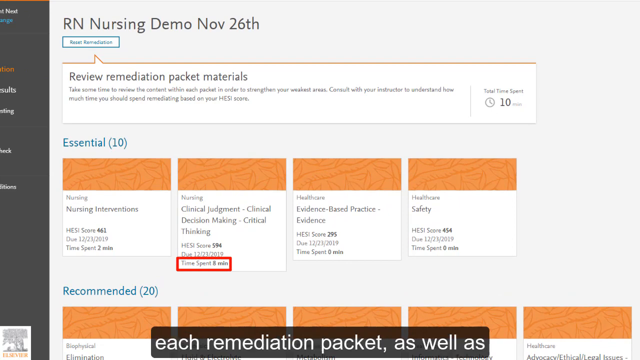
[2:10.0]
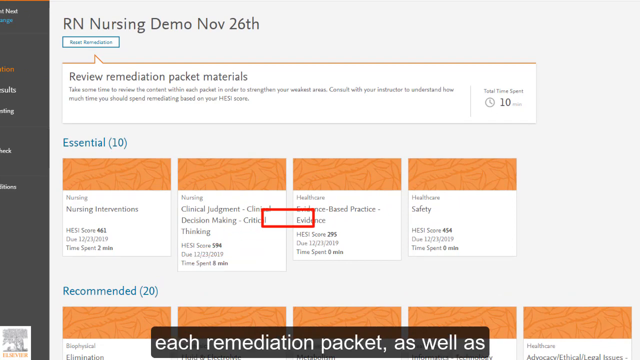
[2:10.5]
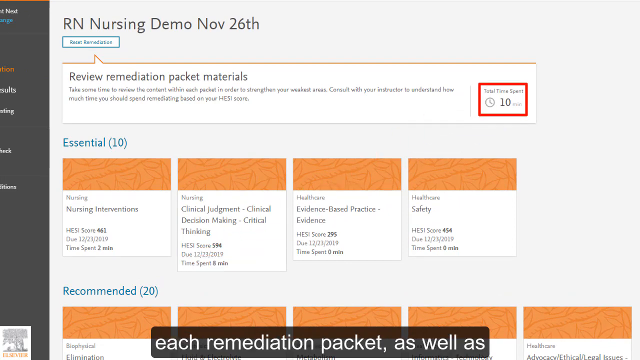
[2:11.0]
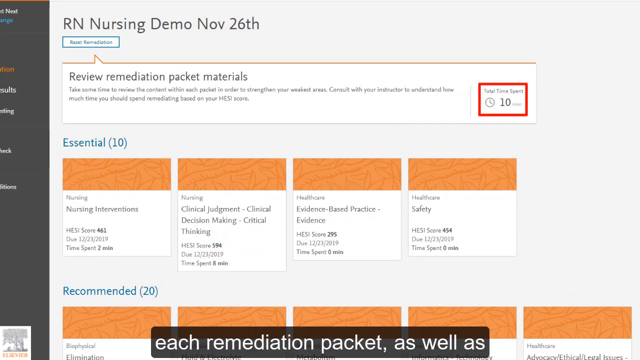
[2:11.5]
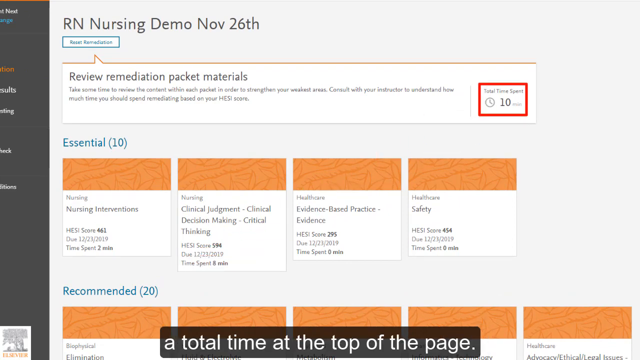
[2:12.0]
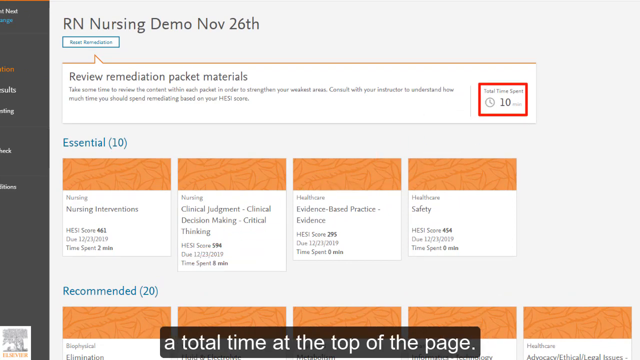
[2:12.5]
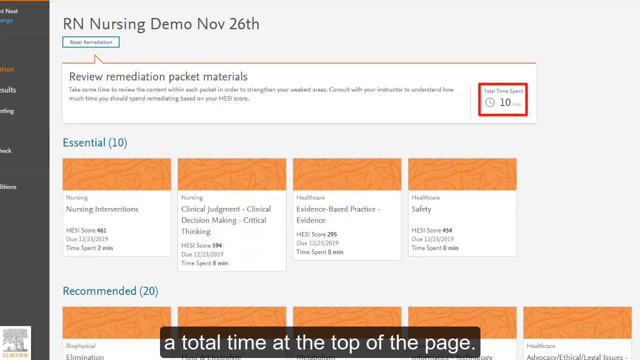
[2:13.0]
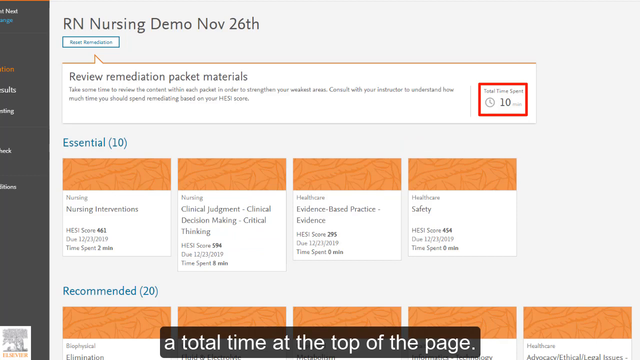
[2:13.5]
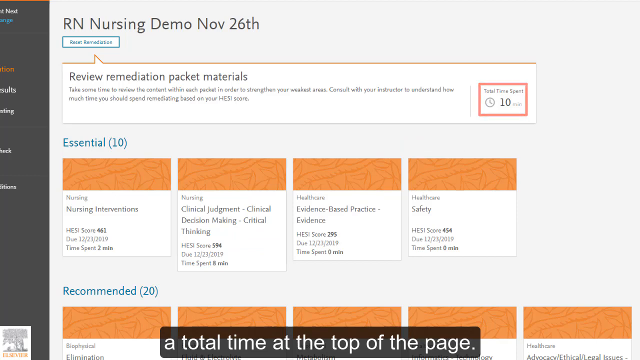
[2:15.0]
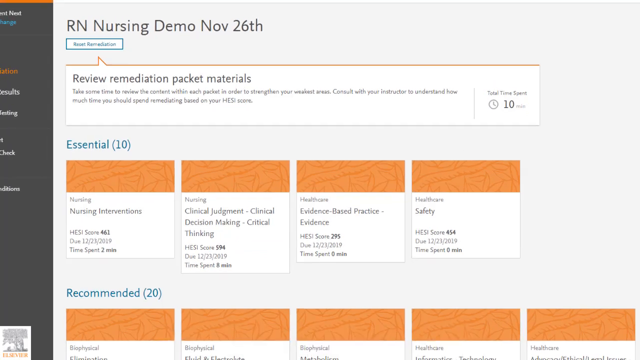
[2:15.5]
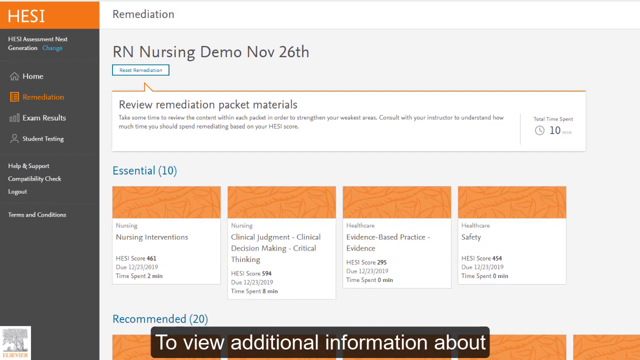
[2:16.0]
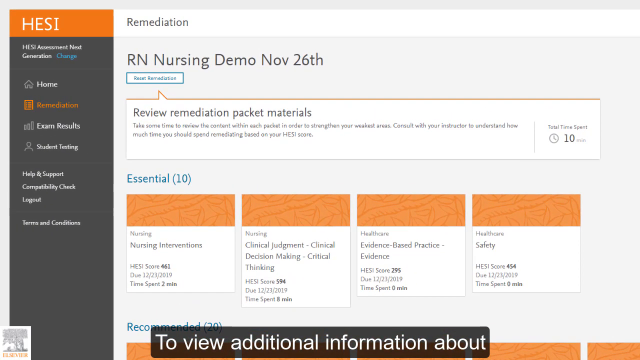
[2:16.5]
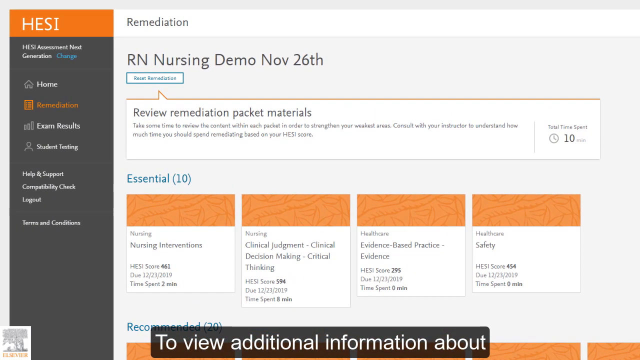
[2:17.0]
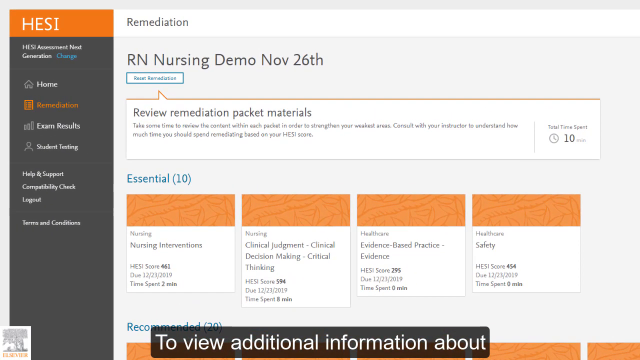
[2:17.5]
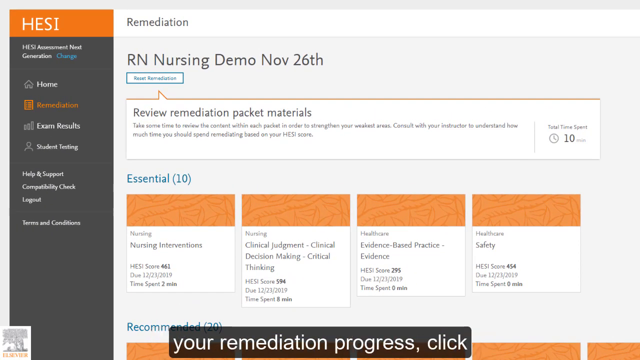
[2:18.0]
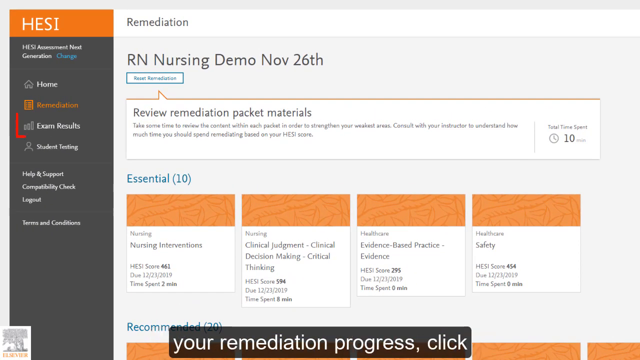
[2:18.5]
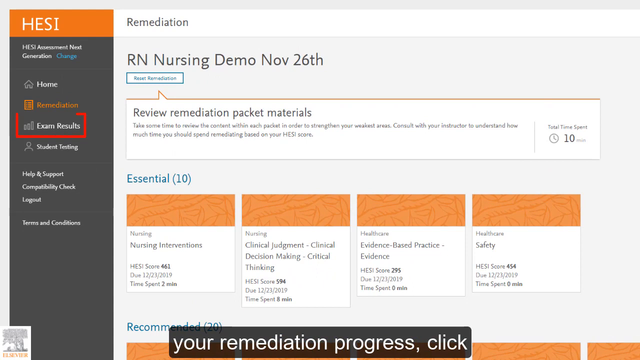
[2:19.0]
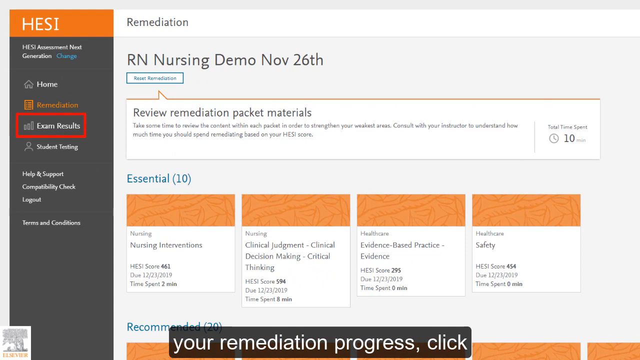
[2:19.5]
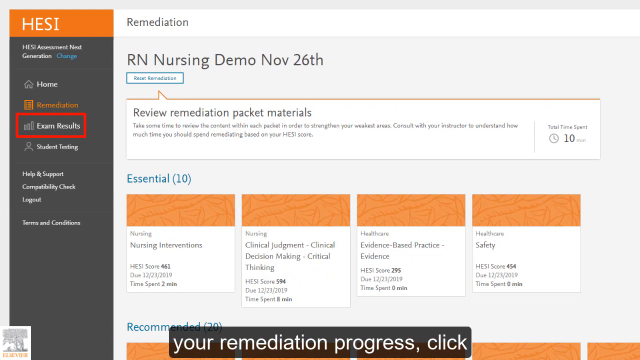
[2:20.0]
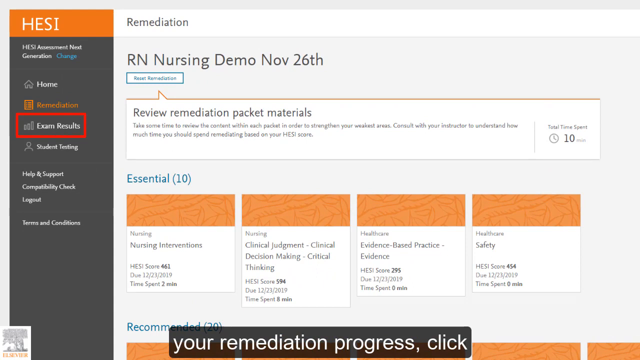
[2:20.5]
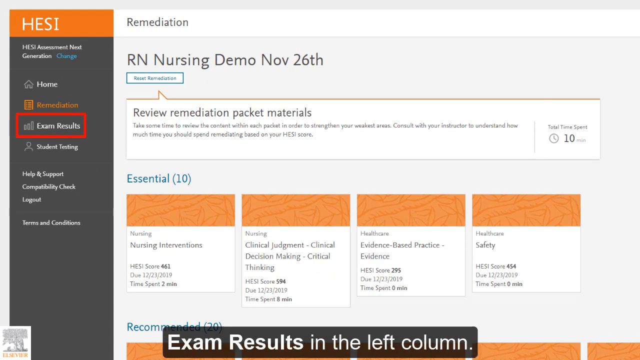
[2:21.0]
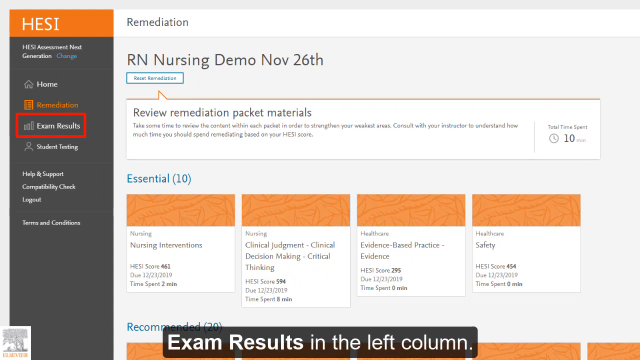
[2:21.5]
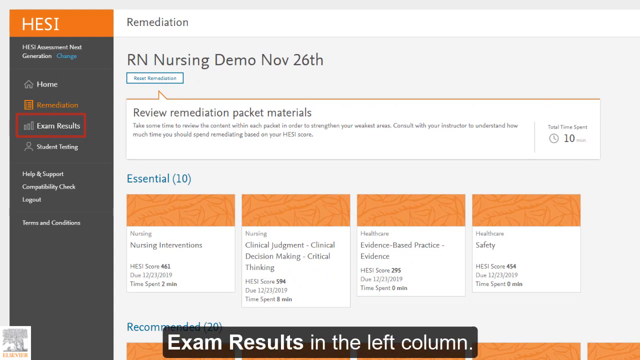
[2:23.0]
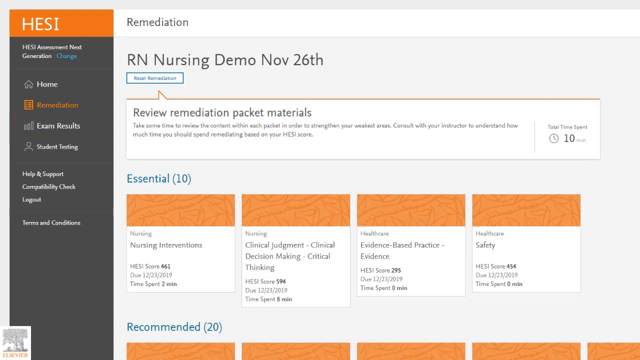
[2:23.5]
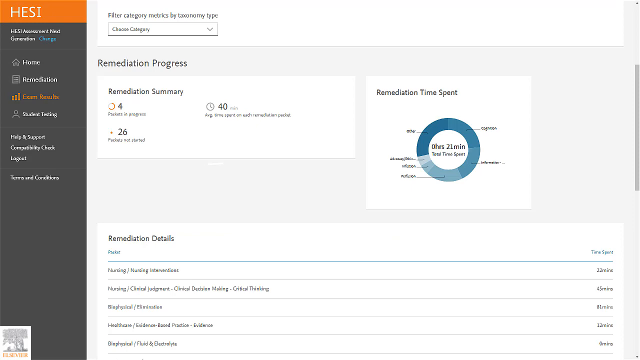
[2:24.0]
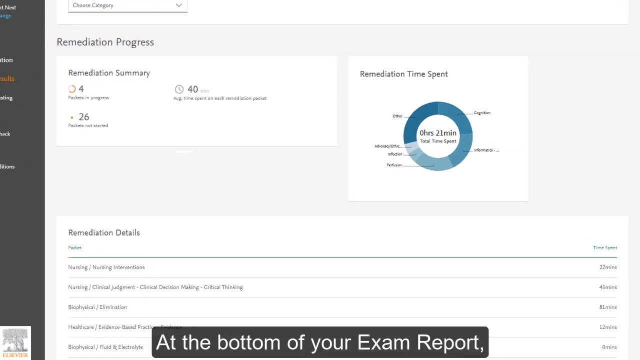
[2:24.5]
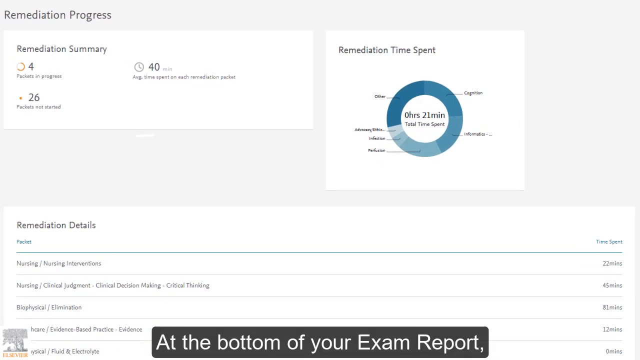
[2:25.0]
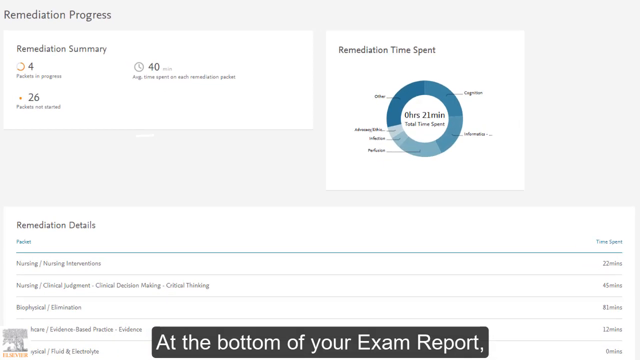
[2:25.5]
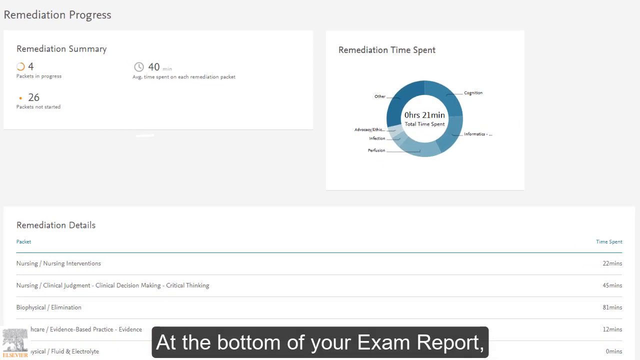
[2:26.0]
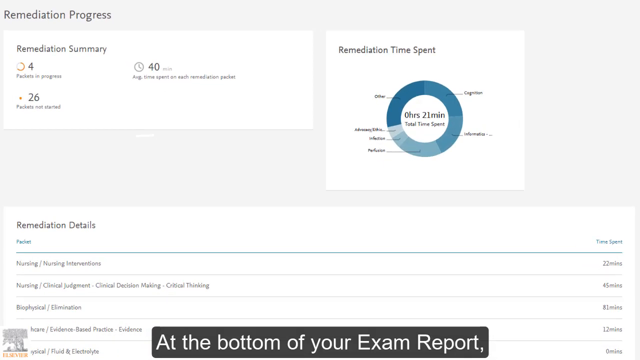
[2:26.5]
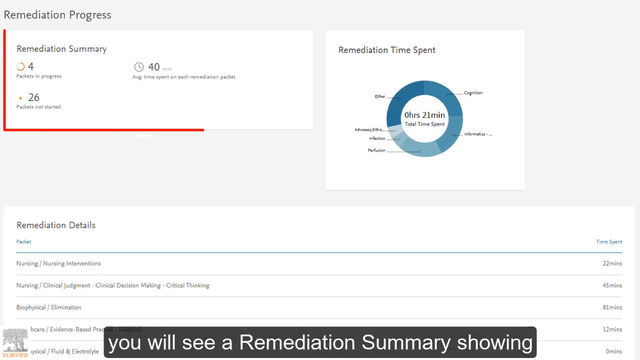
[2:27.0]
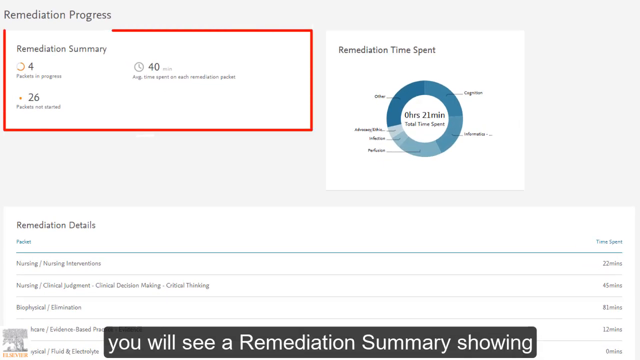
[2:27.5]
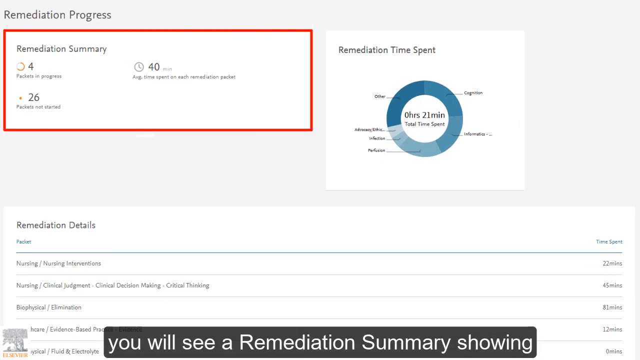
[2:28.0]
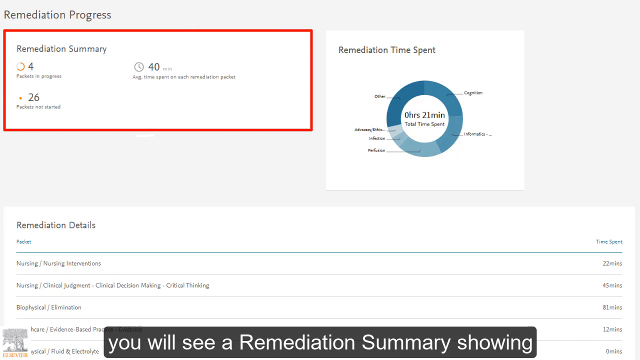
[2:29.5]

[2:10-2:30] The page shows "RN Nursing Demo, November 26th" and "Review remediation packet materials. Take some time to review the content within each packet in order to strengthen your weakest areas. Consult with your instructor to understand how much time you should spend remediating based on your HESI score." Under Essential 10, Nursing Intervention has a HESI score of 461; Nursing Clinical Judgment, Clinical Decision Making and Critical Thinking has a HESI score of 594 with eight minutes spent; Evidence-Based Practice has a HESI score of 295 with zero minutes spent; Healthcare Safety has a HESI score of 454 with zero minutes spent. The total time spent on RN Nursing Demo is 10 minutes. Text explains that total time is at the top of the page, that clicking exam results in the left column shows more about remediation progress, and that a remediation summary appears at the bottom of the exam report. The top left corner of the page shows Home, Remediation, Student testing and Exam results.